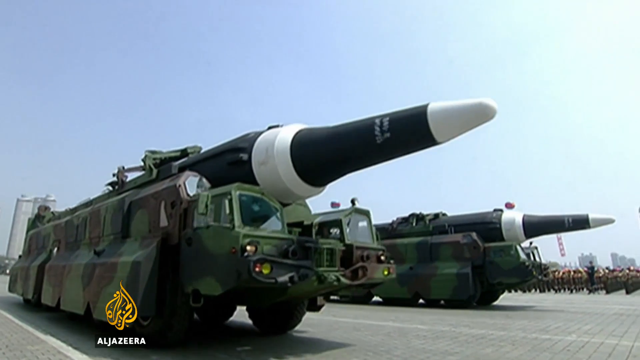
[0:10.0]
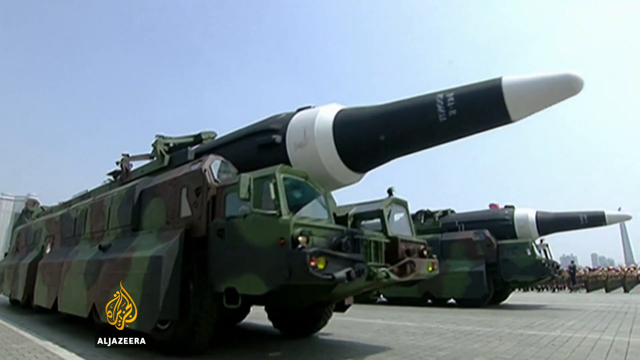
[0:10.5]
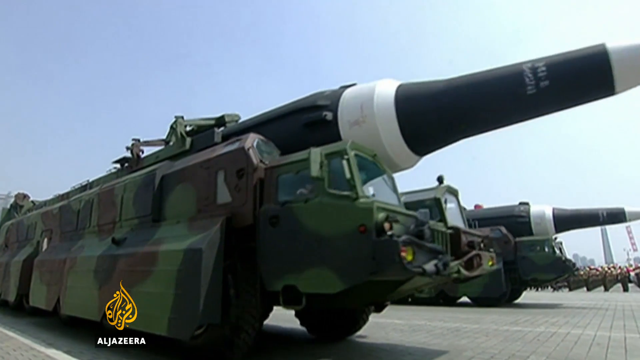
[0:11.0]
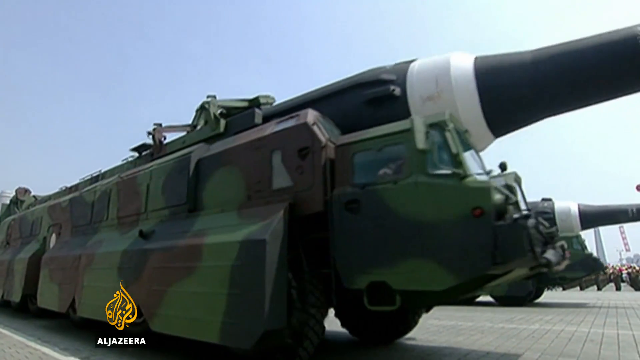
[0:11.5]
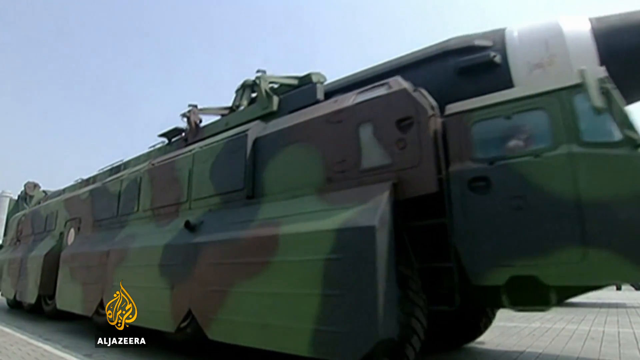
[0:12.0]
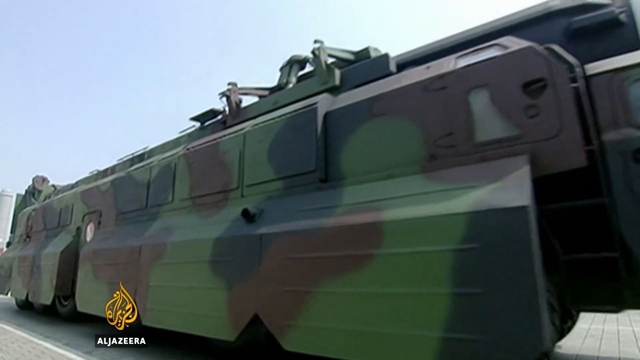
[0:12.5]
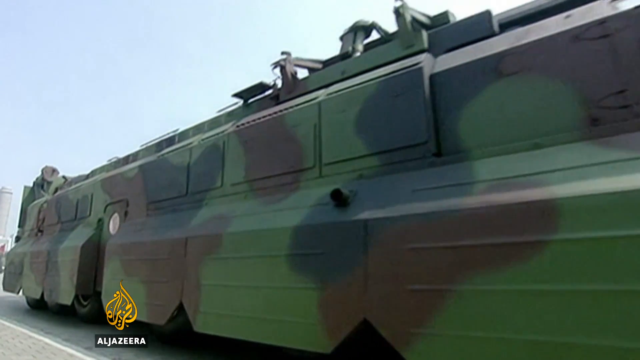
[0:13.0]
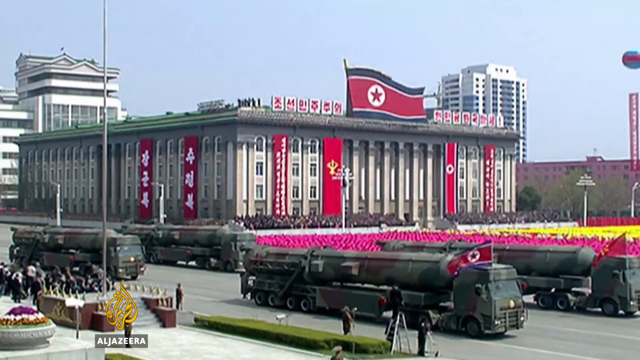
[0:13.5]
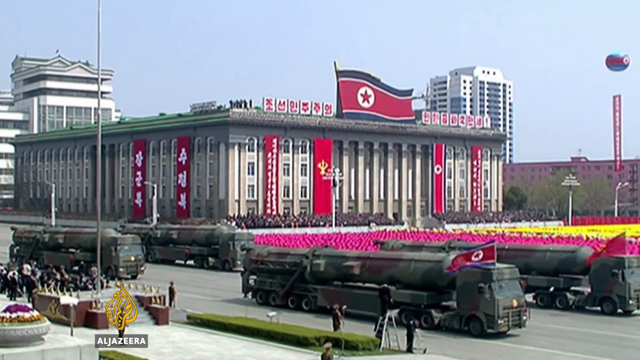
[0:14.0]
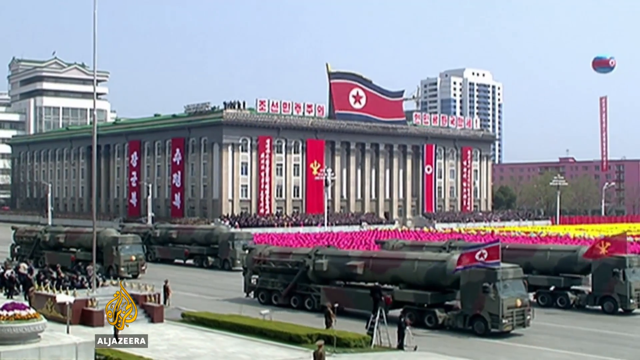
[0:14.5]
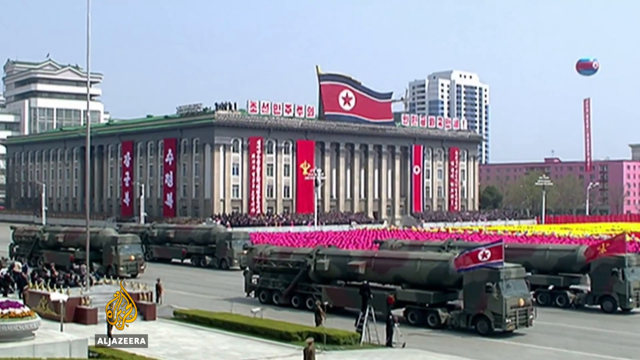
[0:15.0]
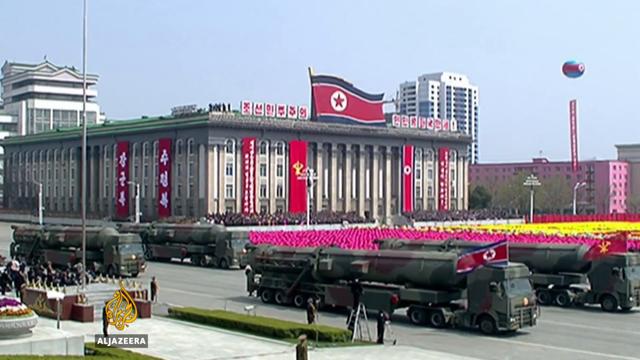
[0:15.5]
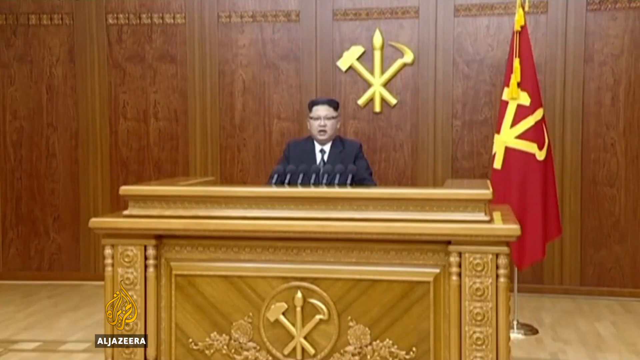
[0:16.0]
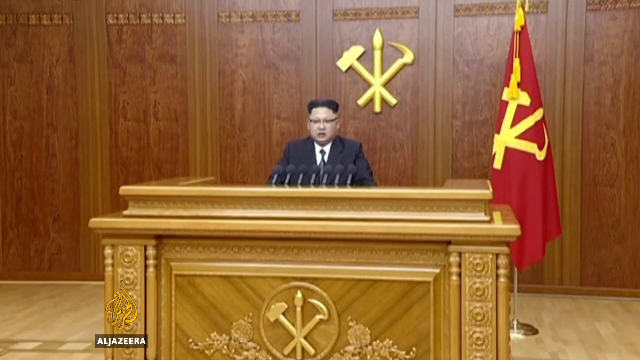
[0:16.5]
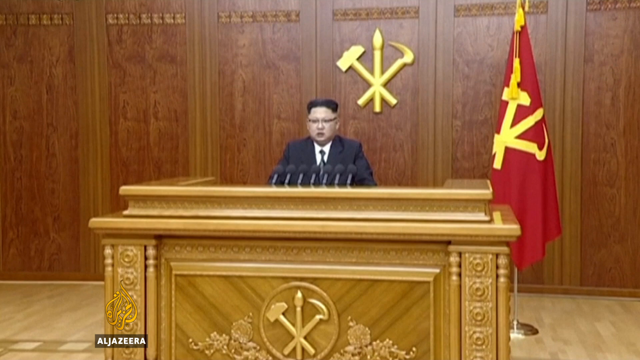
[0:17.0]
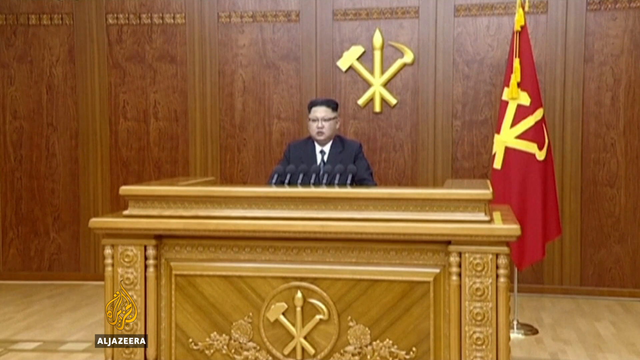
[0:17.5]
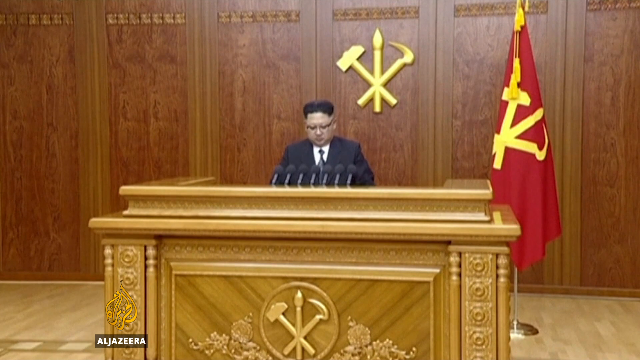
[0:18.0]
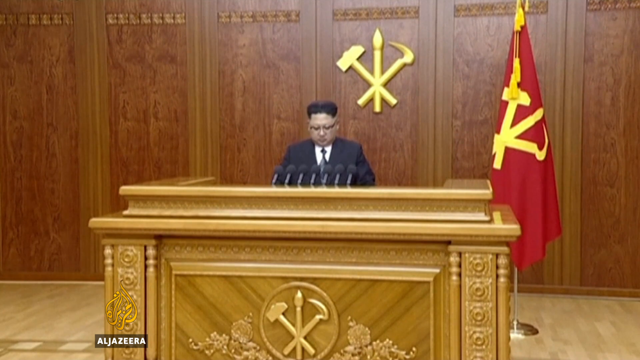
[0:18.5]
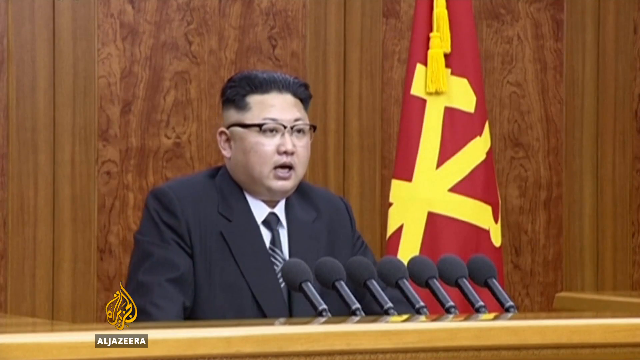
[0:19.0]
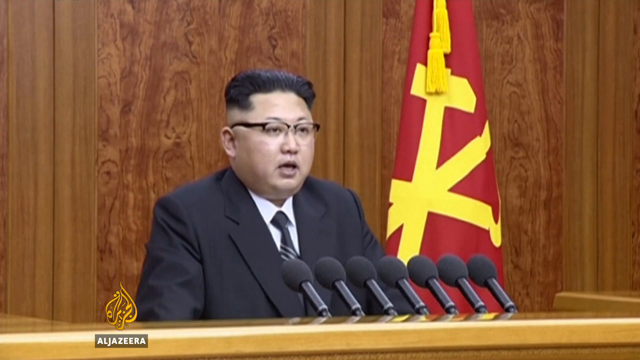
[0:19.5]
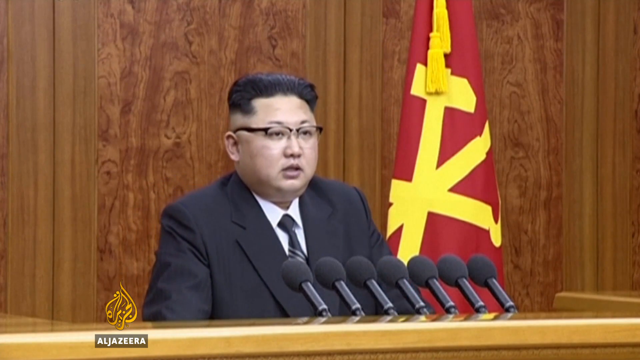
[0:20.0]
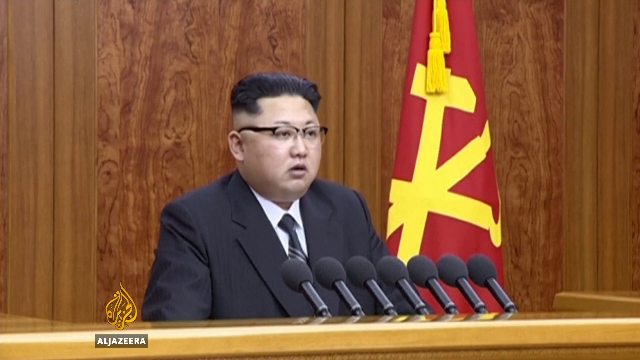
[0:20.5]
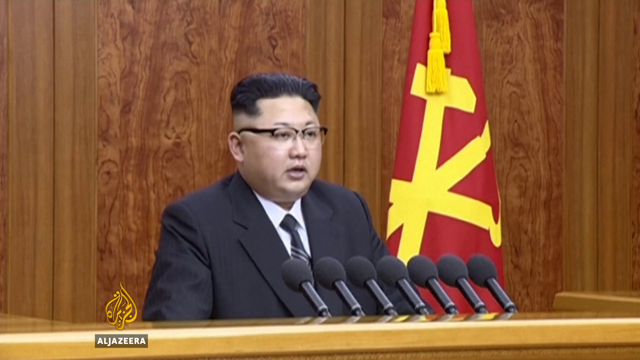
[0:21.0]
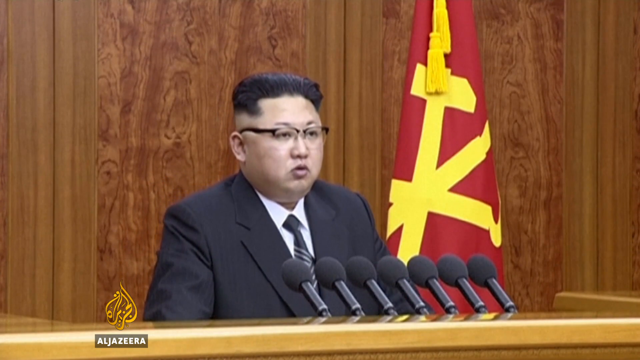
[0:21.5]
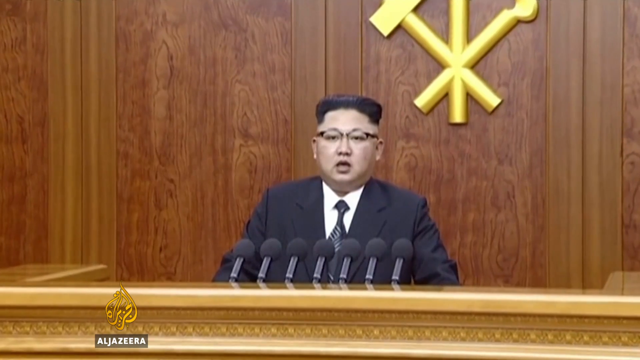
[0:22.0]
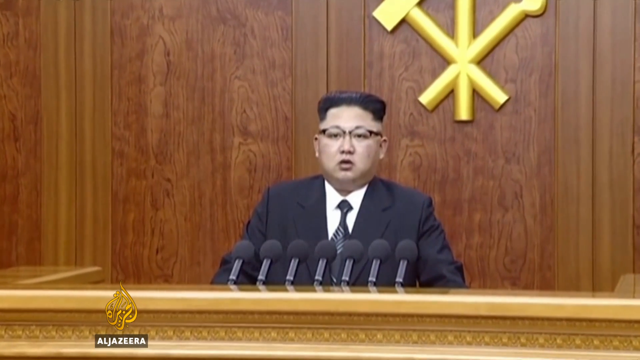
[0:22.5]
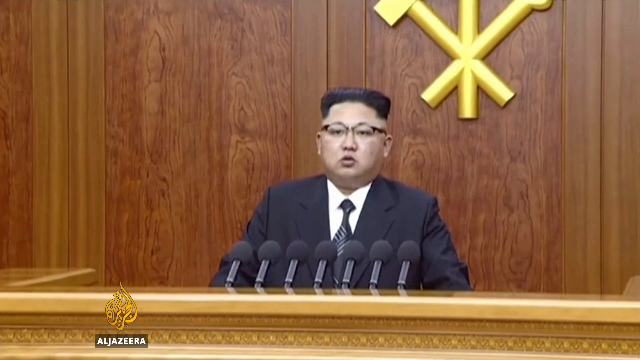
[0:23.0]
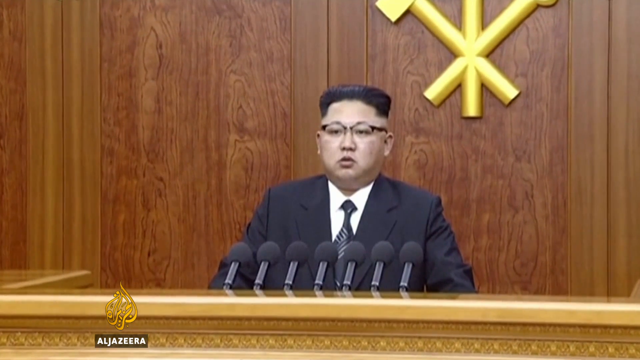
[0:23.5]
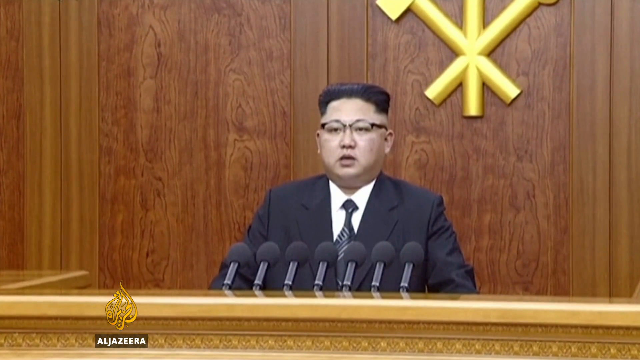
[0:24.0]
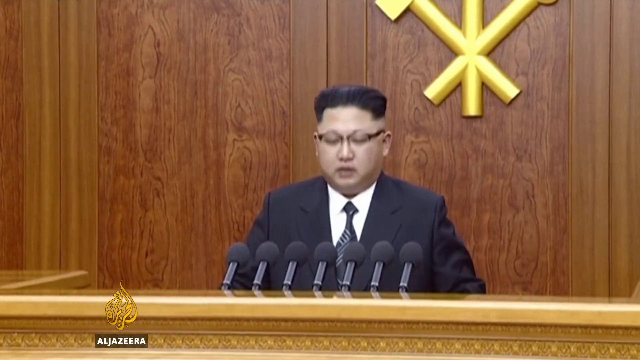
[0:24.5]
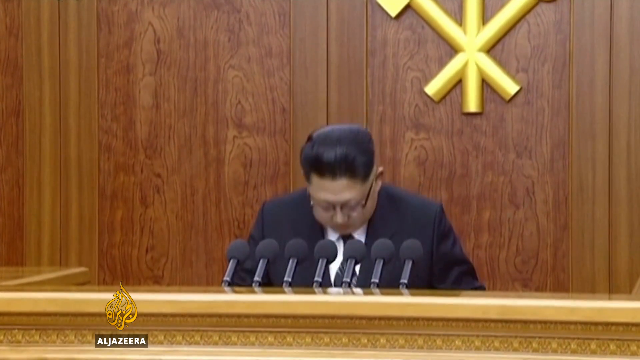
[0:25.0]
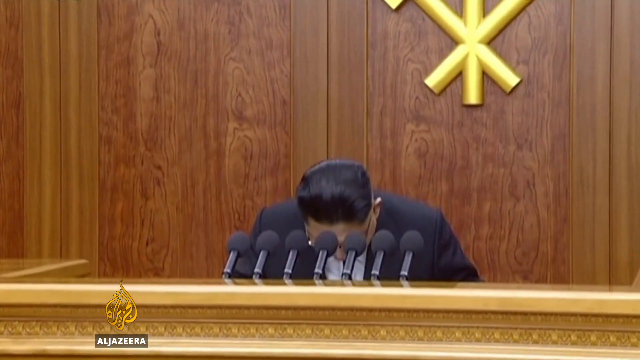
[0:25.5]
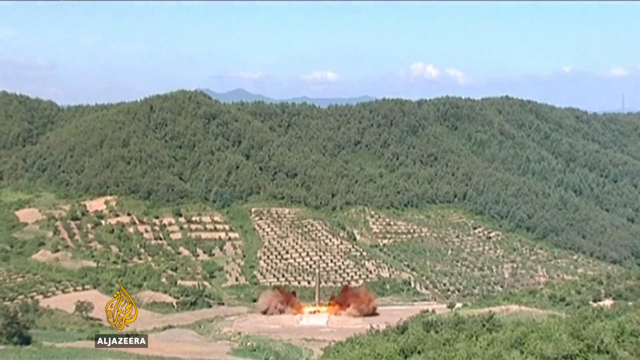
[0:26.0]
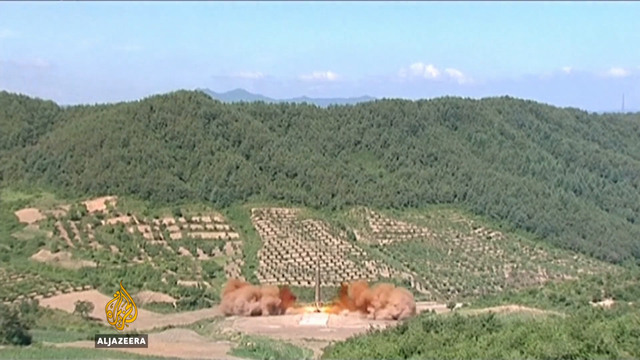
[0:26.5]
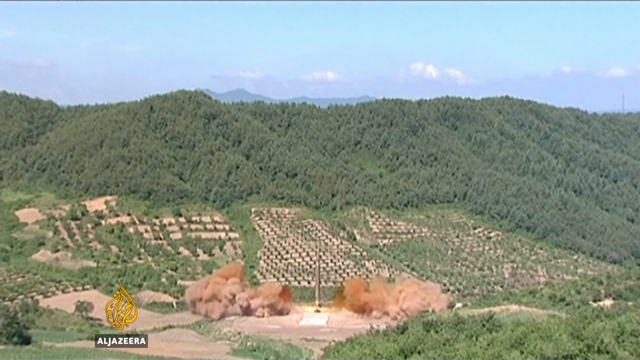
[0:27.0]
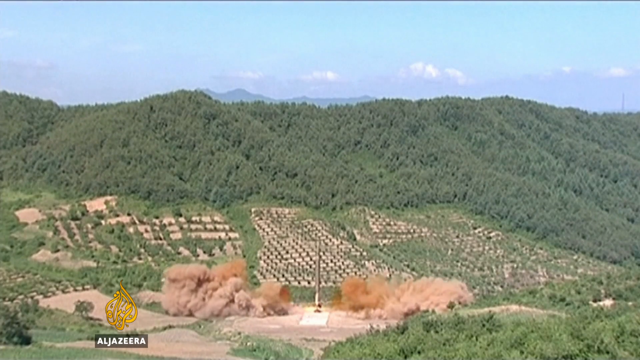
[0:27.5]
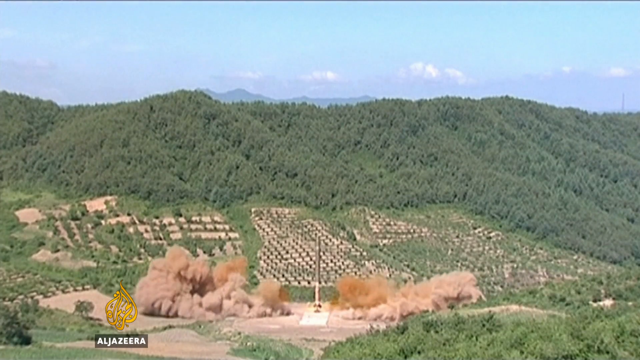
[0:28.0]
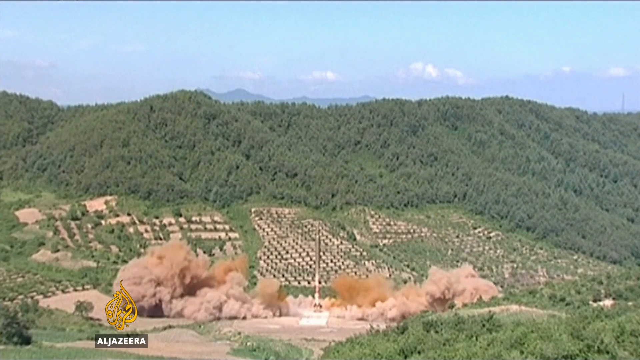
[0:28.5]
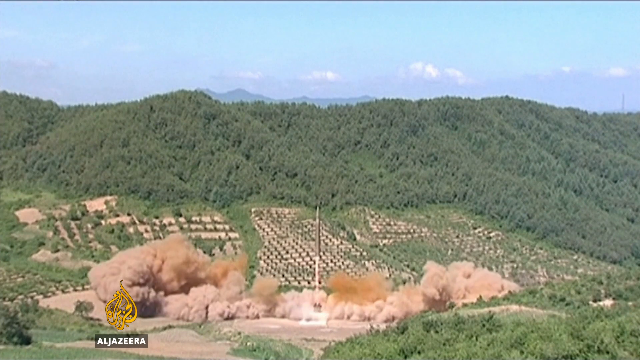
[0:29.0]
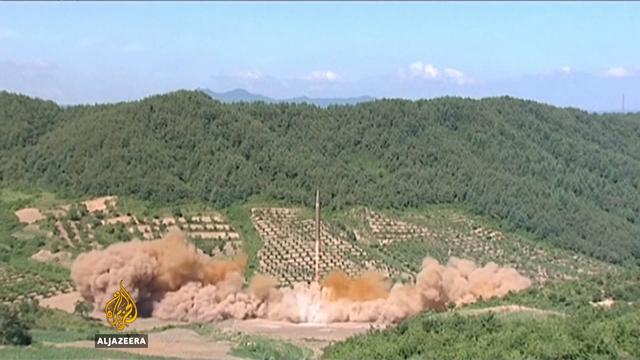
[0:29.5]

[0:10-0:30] Green and brown army cars, their top parts shaped like rockets, drive down the road; there are several of them on the street. Buildings are behind them, with a flag on top of one building, and there are also flags on the cars. A man in a black suit, a black tie and a white t-shirt appears, with a red and yellow flag next to him. He wears glasses and is sitting down, talking through one of the mics on the table while camera flashes go off. He appears to be in a large building. A rocket then goes up into the sky from the ground, leaving huge dust, with trees around.